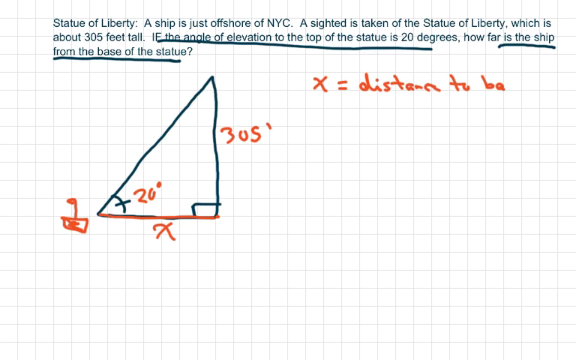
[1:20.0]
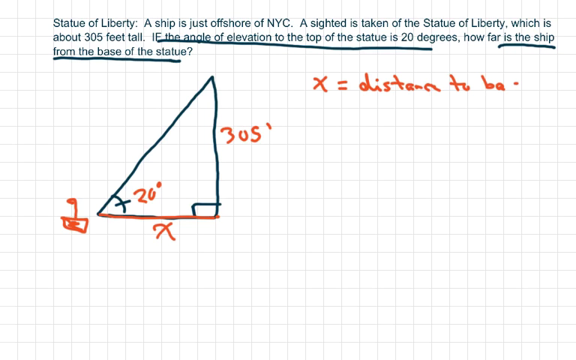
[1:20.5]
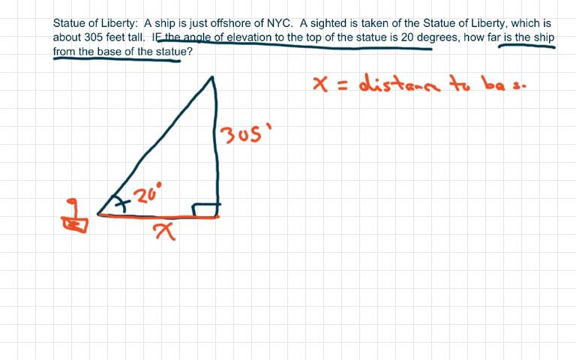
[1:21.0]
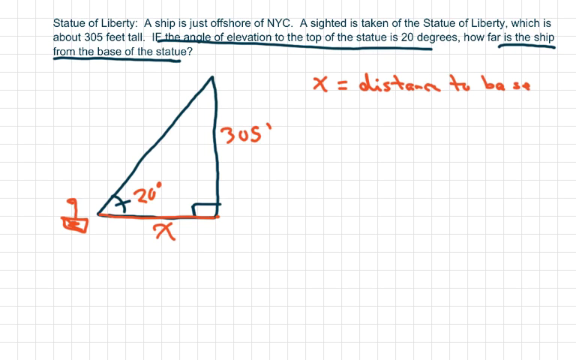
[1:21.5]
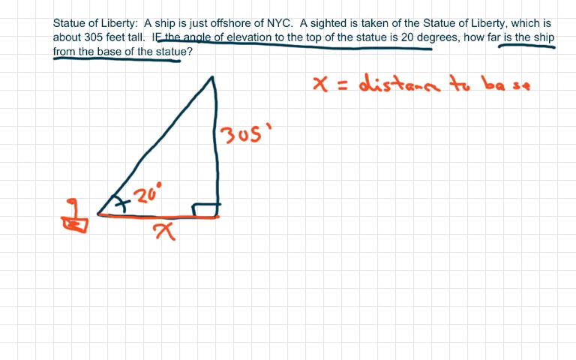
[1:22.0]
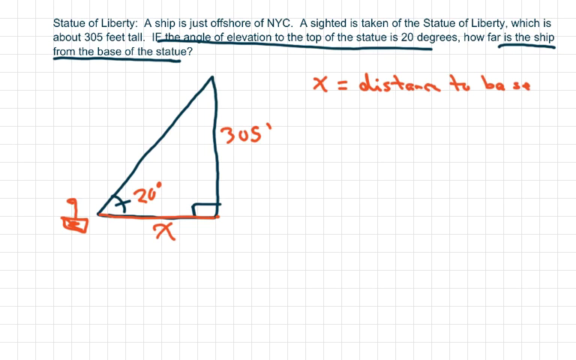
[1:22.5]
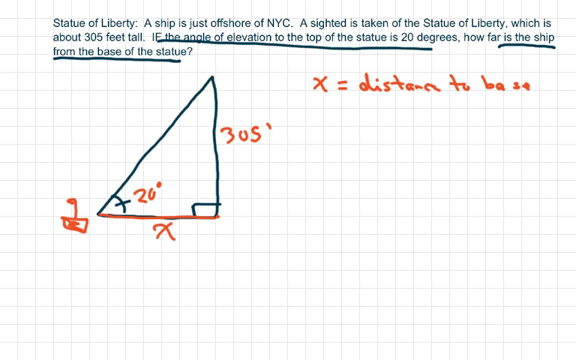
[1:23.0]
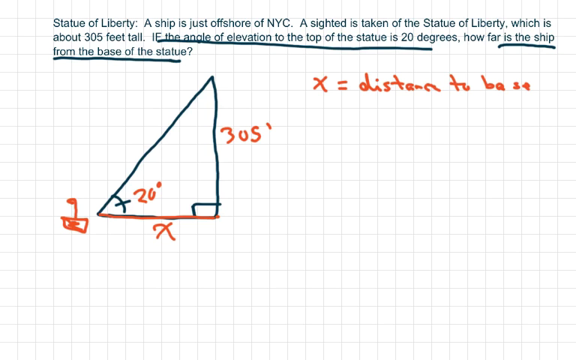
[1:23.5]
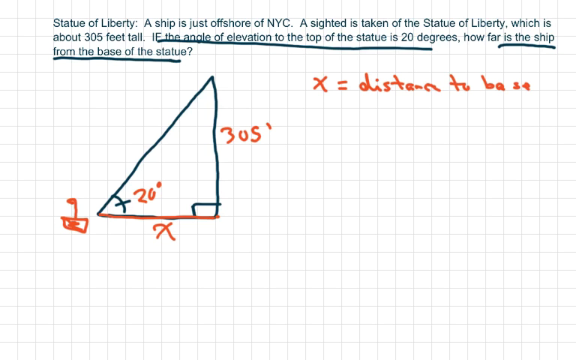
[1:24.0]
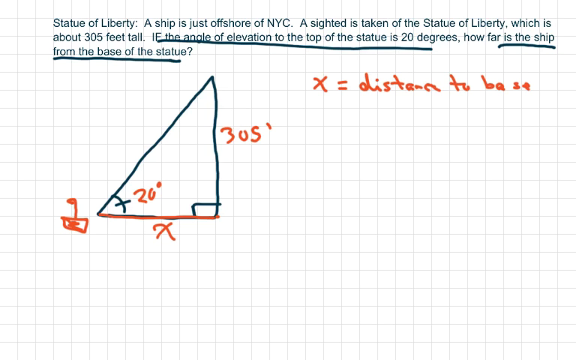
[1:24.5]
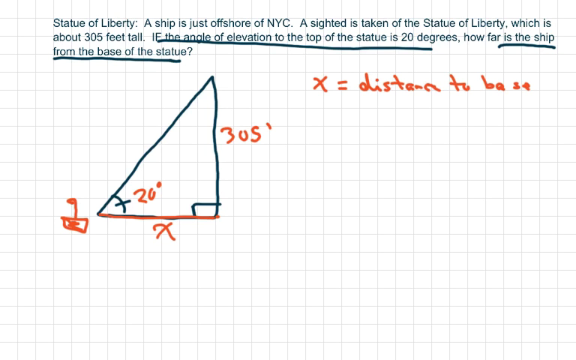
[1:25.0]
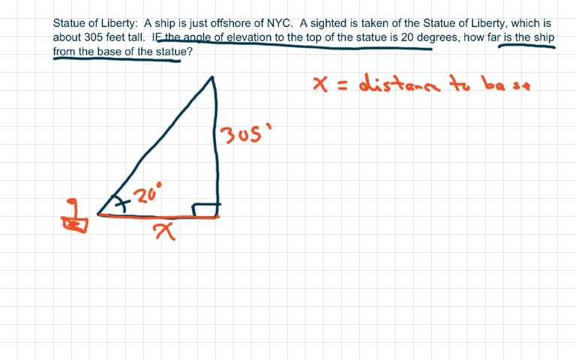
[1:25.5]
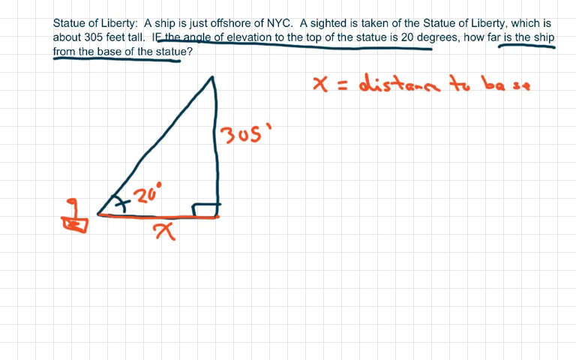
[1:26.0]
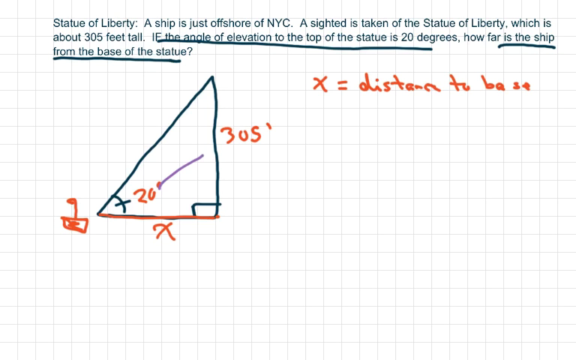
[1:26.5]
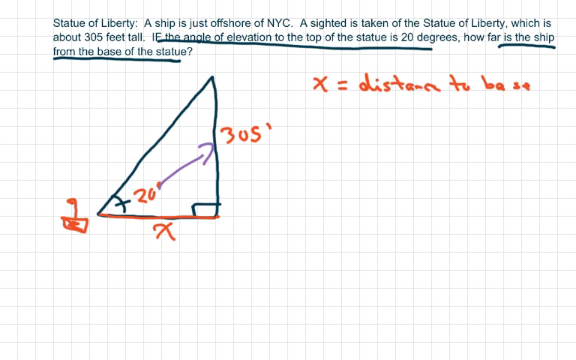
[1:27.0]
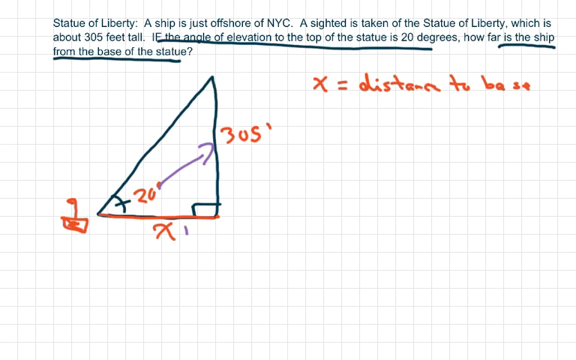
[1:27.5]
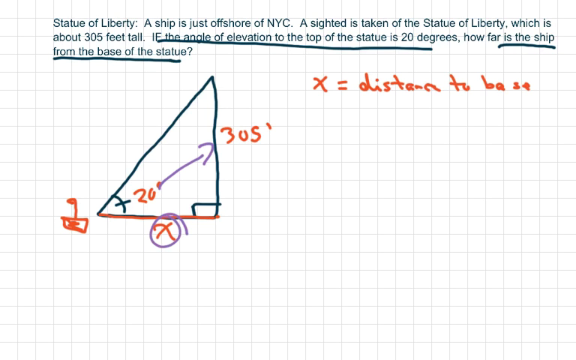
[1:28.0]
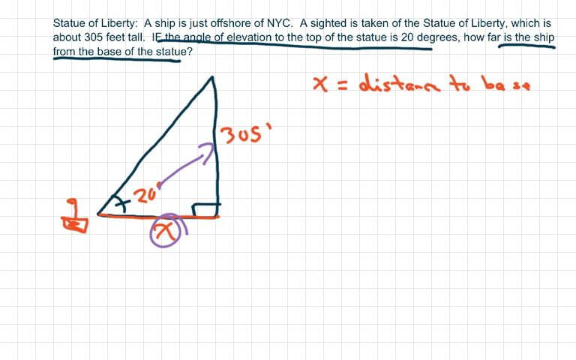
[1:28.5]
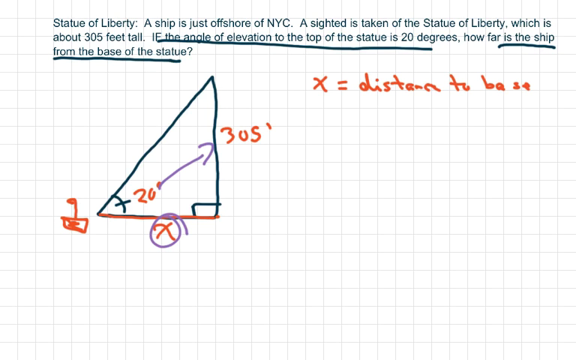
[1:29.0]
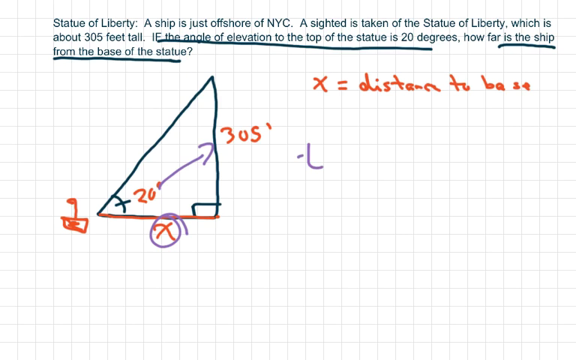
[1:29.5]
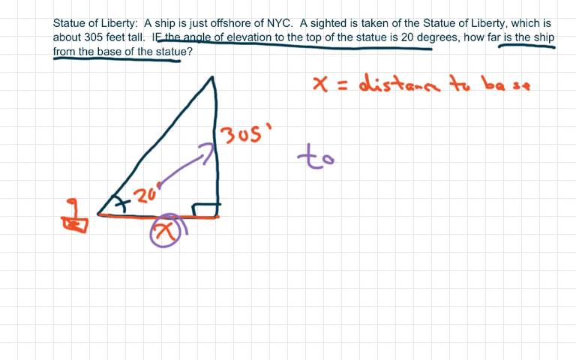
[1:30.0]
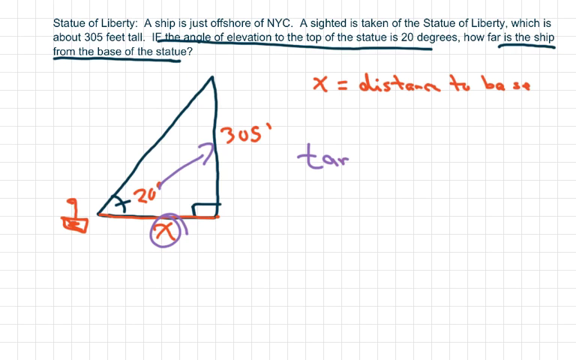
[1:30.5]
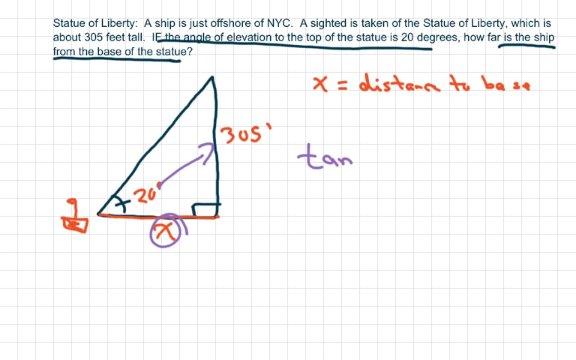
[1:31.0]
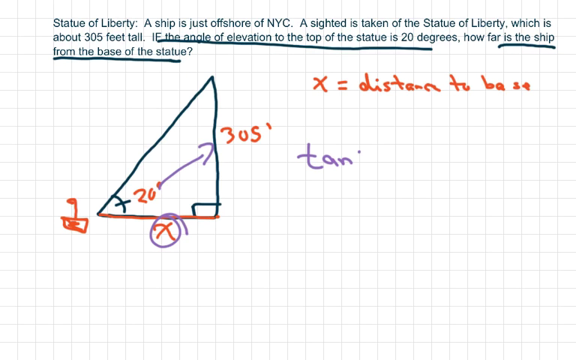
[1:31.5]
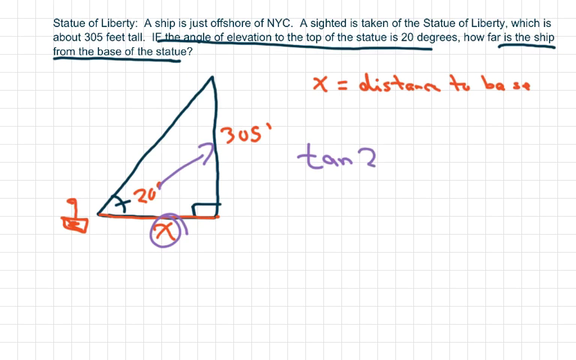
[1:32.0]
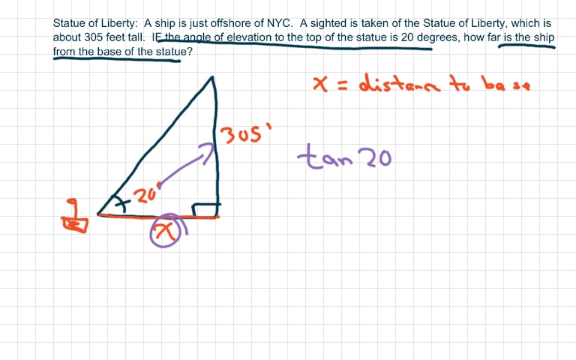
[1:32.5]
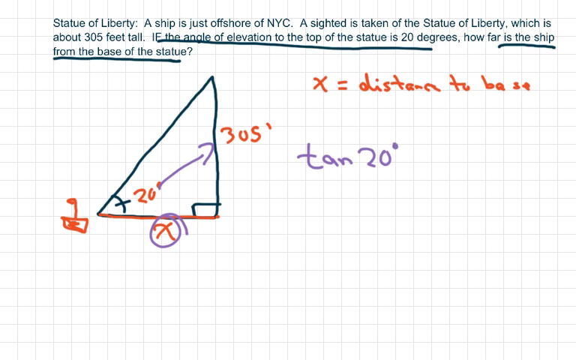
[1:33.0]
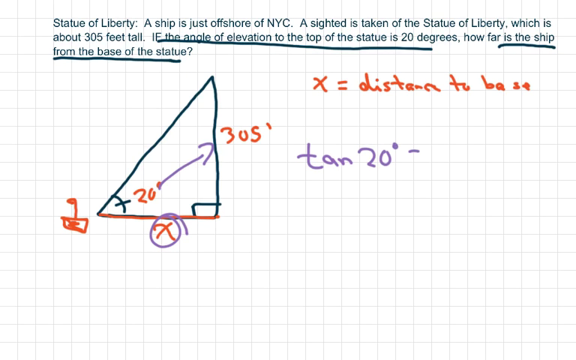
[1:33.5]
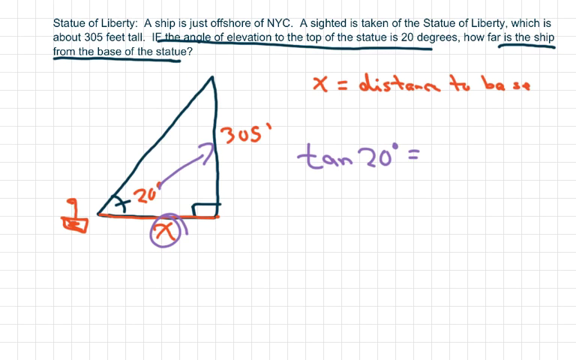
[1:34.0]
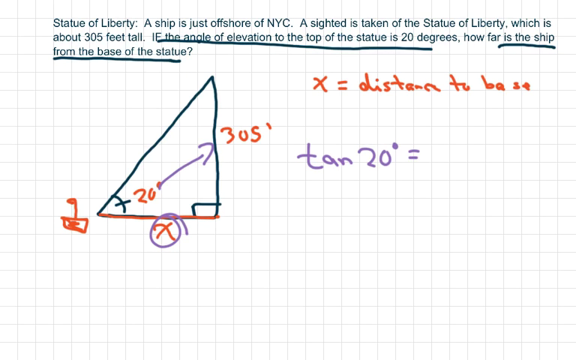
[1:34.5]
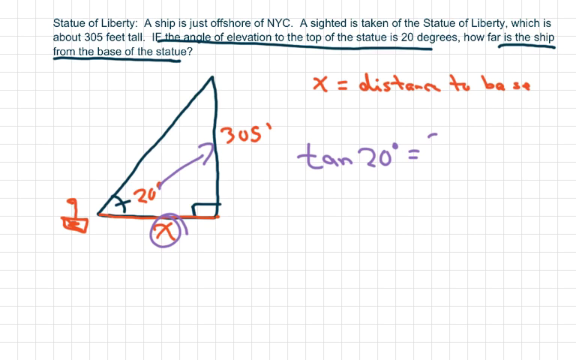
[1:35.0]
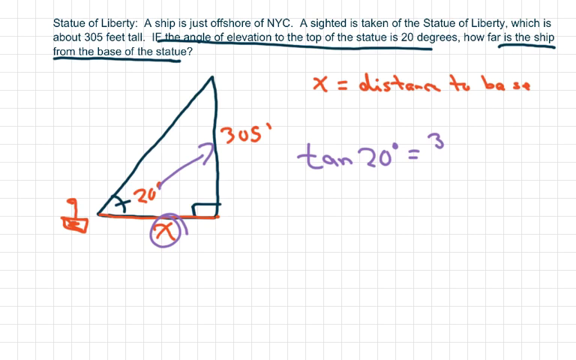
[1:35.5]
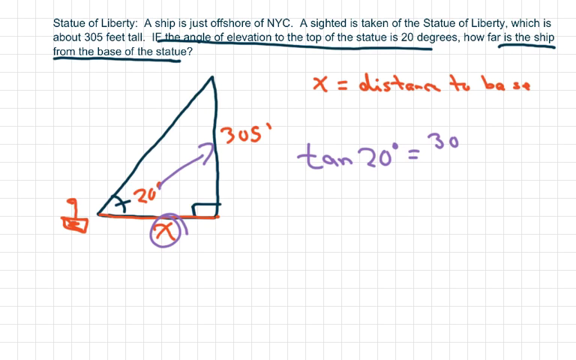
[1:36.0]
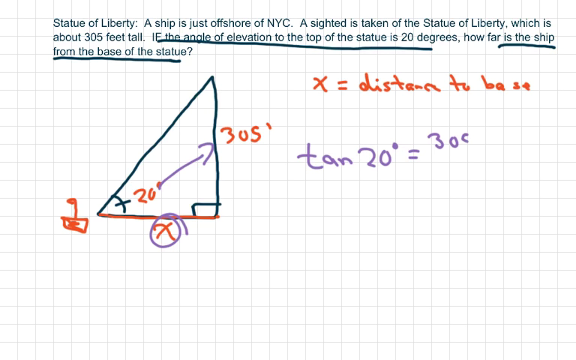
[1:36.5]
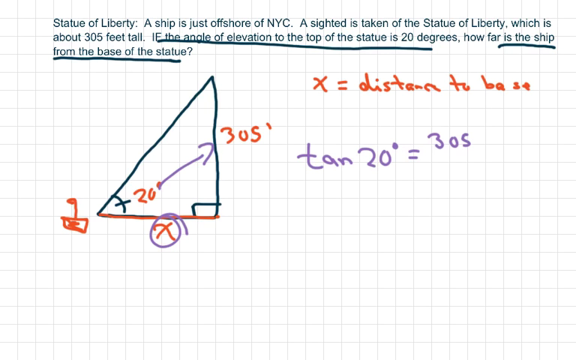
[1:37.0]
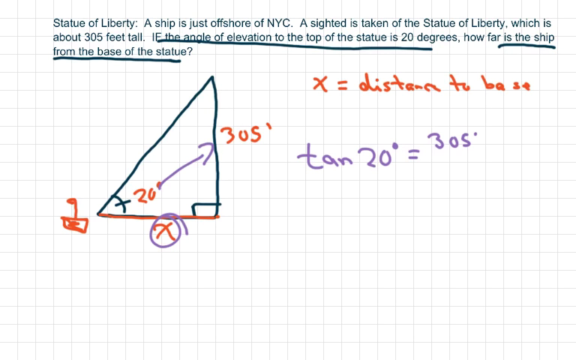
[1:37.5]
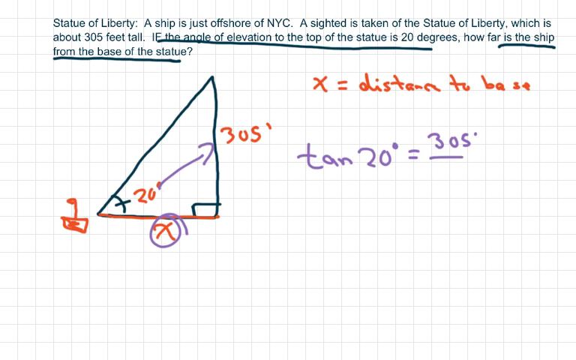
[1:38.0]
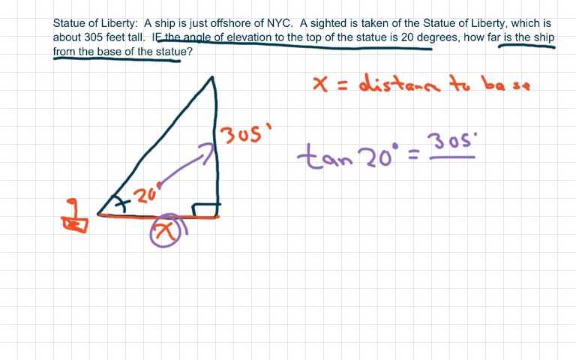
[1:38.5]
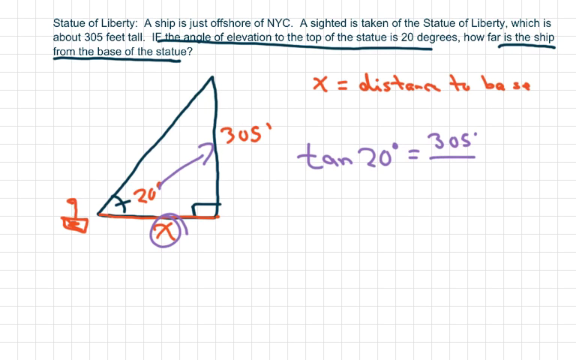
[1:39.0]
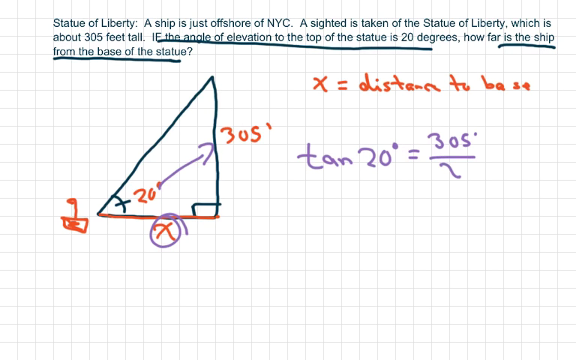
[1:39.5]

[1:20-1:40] On the right side of the triangle, text in red marker reads "x equals distance to base." A light purple arrow goes from the triangle's bottom left angle, marked 20 degrees, and points upward to the middle of the triangle's right side line. To the right of that line, "305' feet" is written in red marker. To the left of the bottom left angle is a small sailboat drawn in red marker. The red X underneath the triangle is then circled with a light purple marker. On the right side of the screen, also in light purple marker, the text "tan 20 degrees equals 305' divided by x" is written.